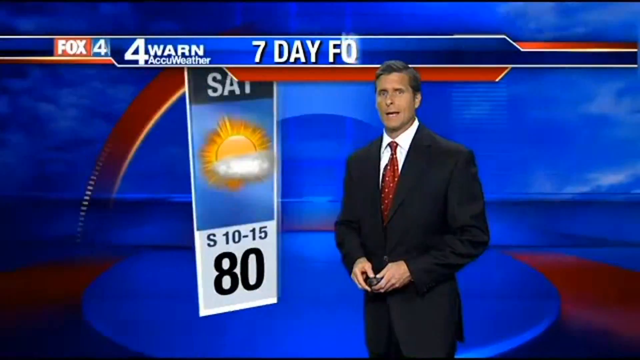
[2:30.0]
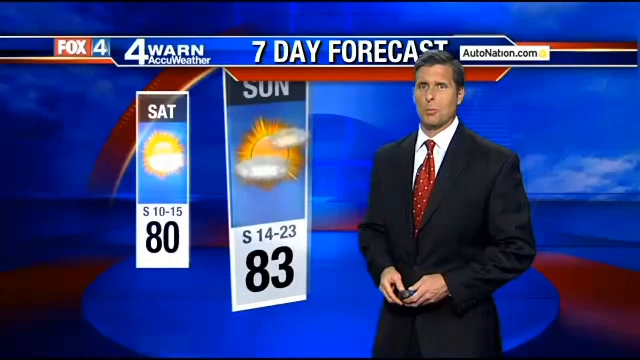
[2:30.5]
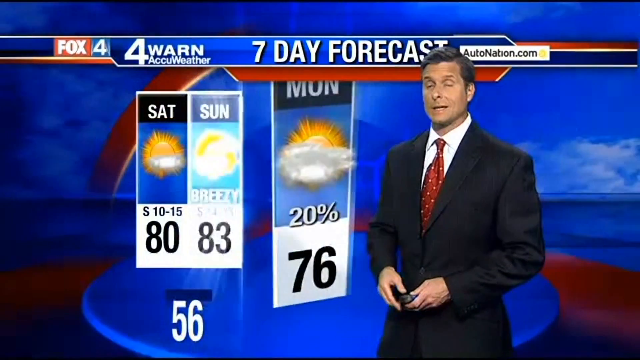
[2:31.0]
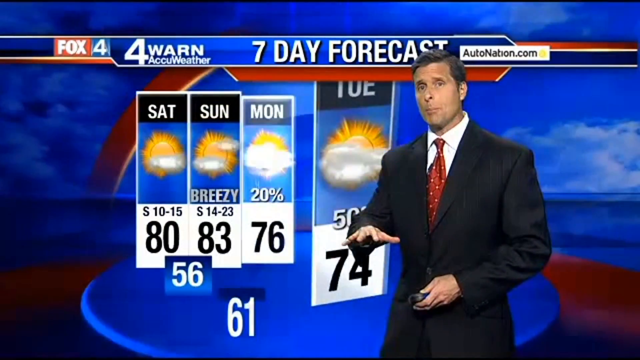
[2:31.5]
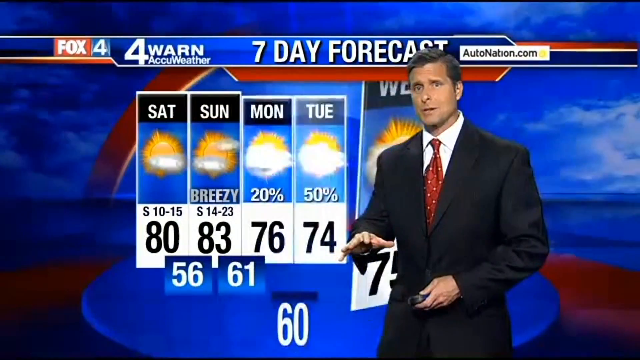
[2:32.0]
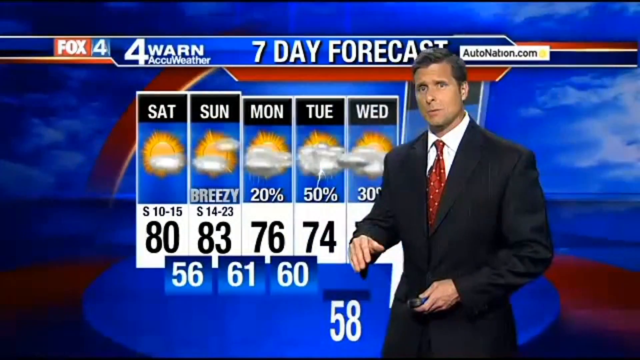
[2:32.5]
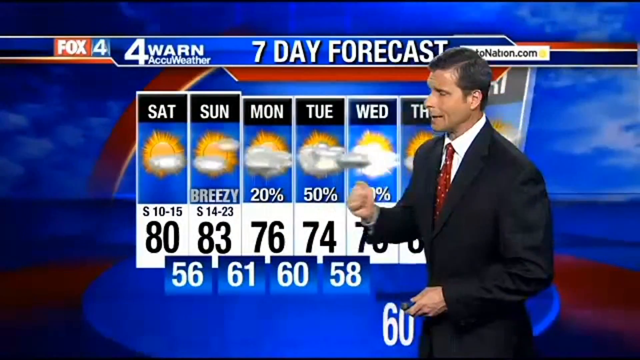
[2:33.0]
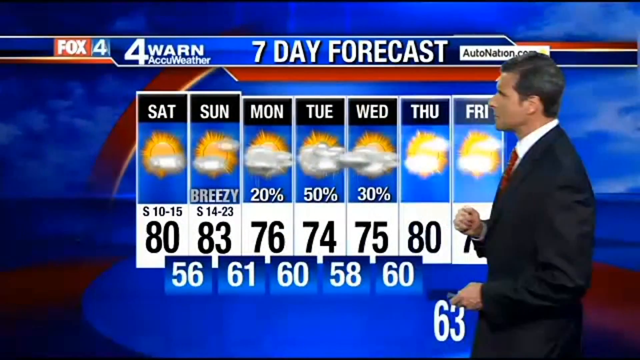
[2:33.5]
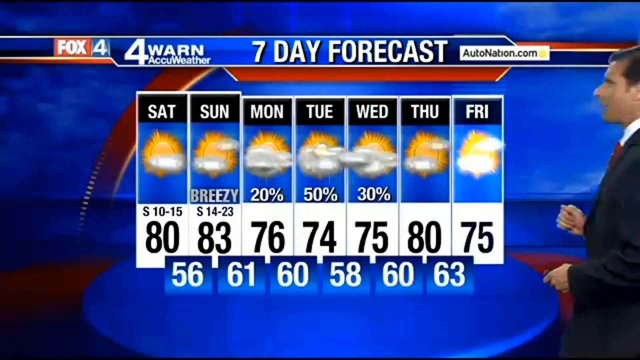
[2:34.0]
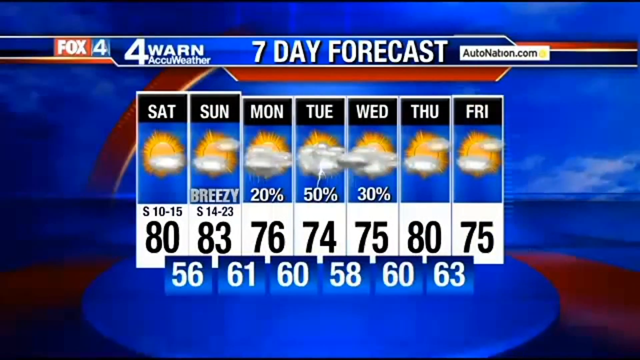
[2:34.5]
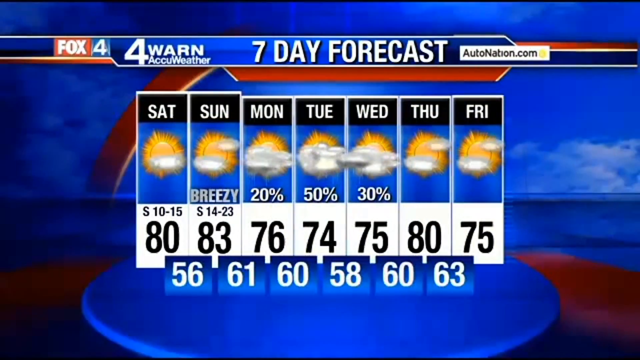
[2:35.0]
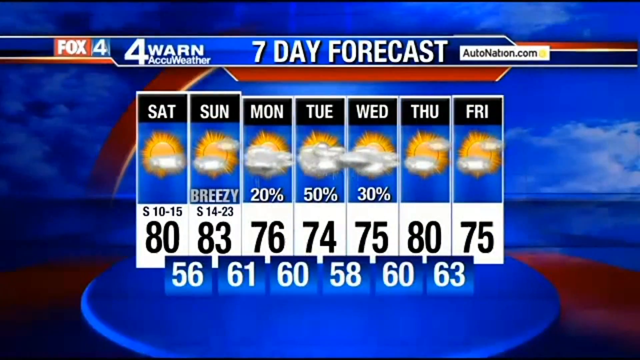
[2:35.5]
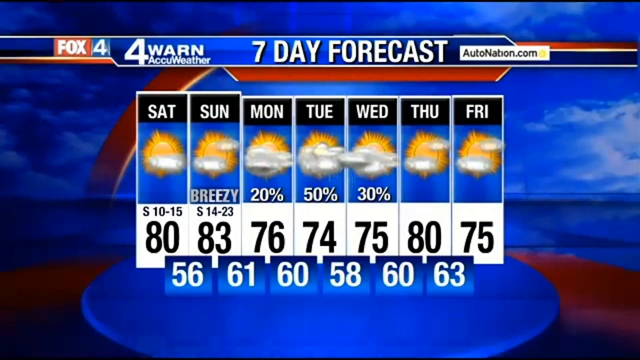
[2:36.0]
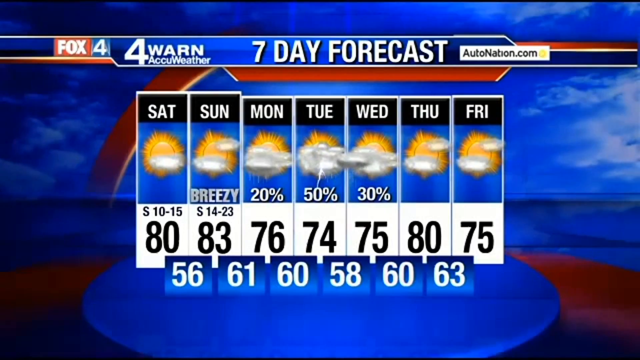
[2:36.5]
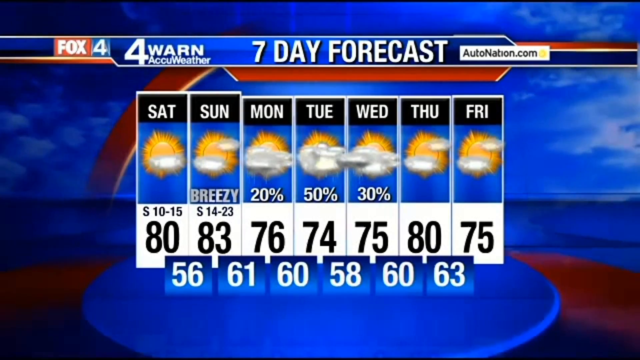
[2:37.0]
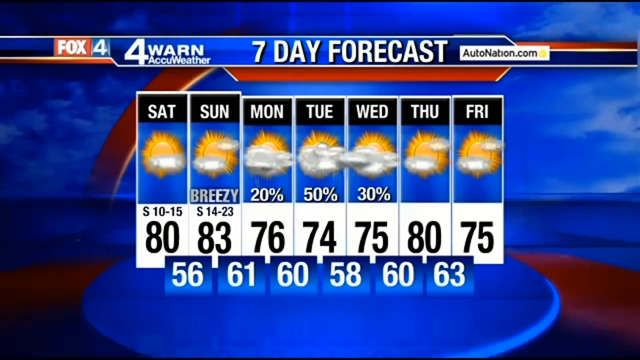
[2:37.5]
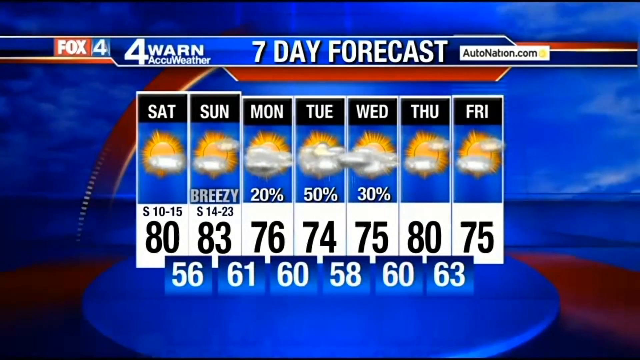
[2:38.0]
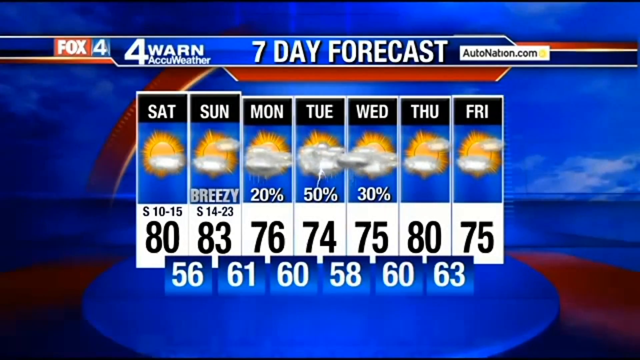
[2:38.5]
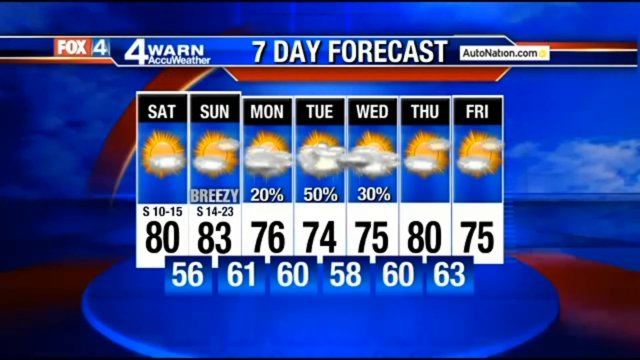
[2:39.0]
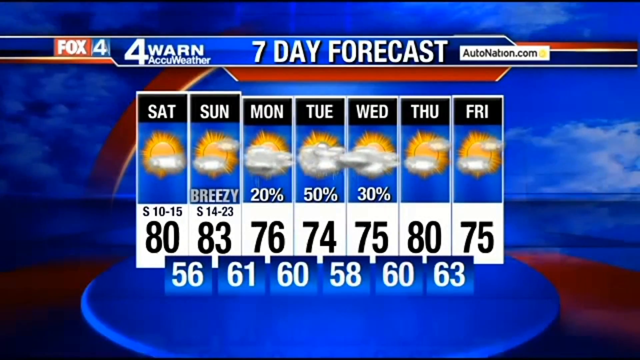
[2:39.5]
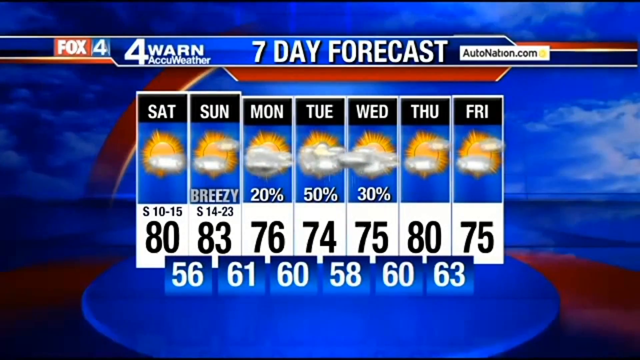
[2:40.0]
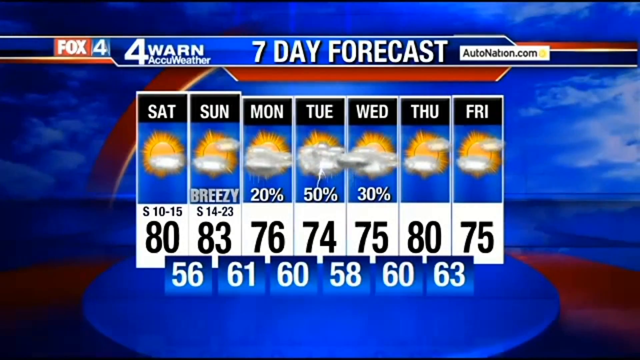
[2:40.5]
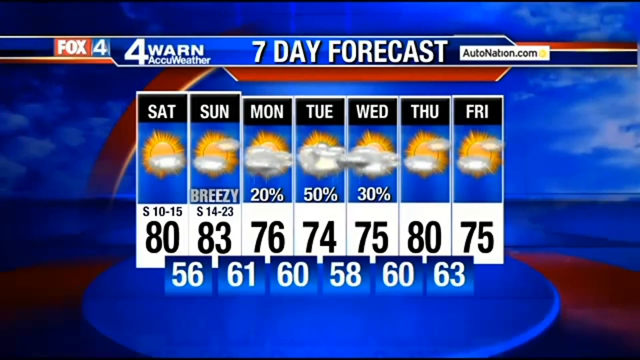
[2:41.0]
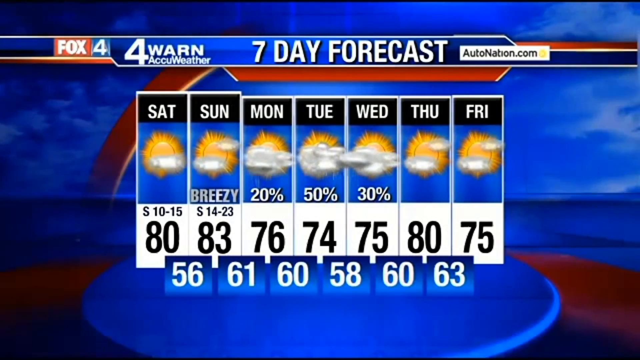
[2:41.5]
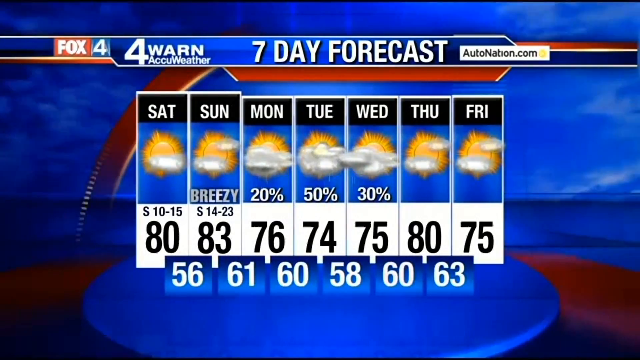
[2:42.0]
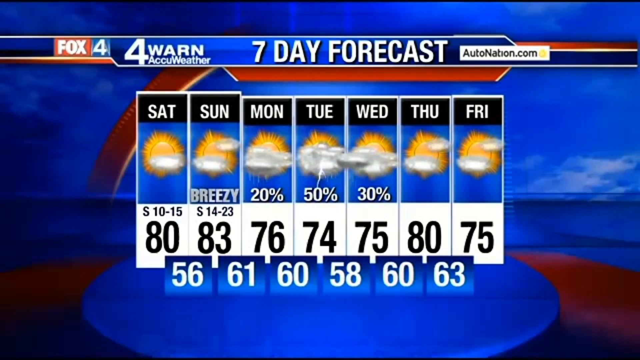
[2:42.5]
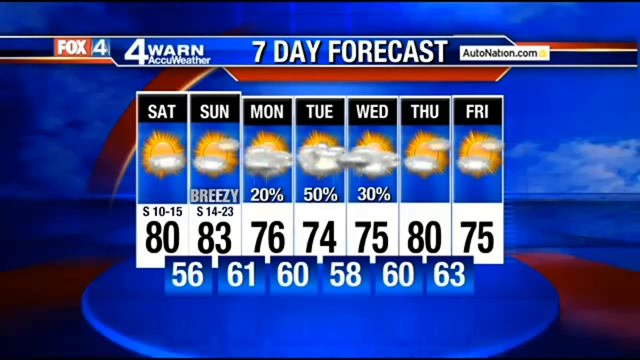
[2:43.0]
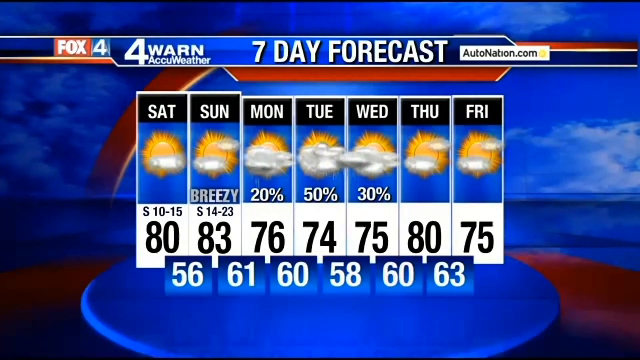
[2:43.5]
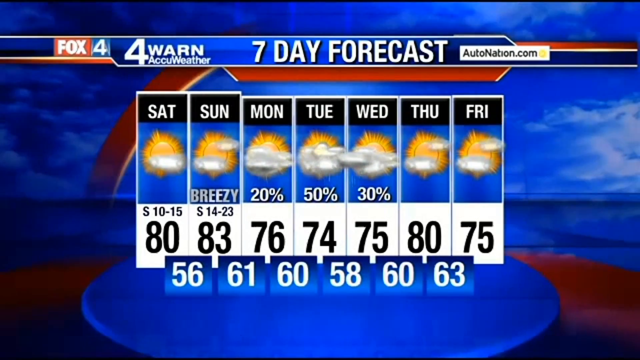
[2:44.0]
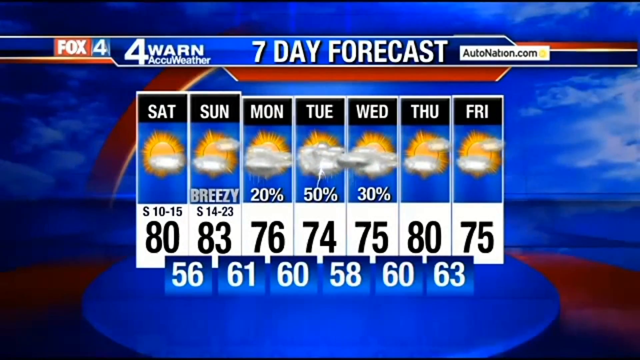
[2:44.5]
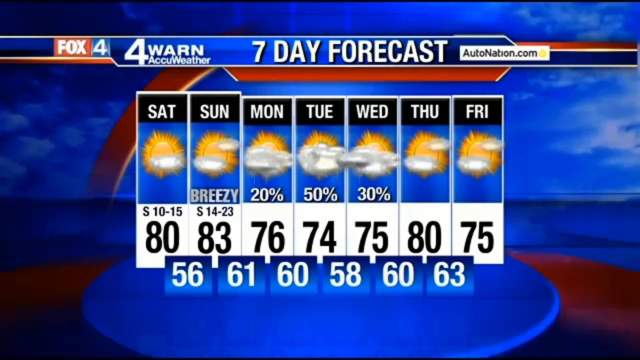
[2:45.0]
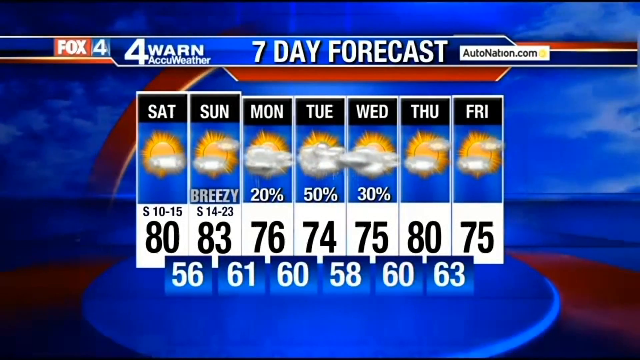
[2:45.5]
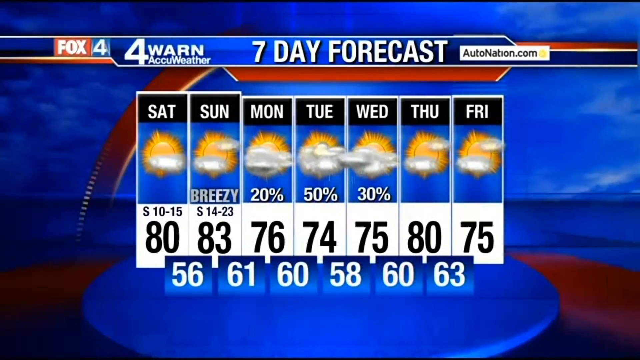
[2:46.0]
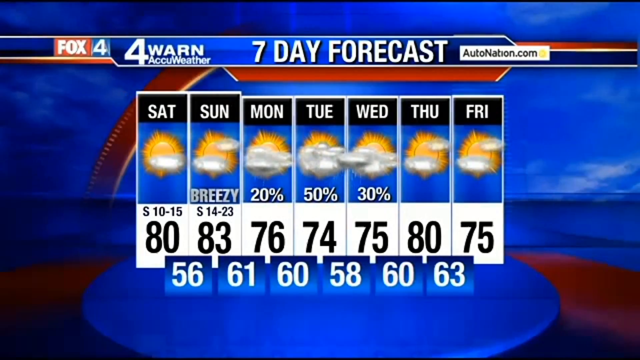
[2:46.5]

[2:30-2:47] A weatherman stands in the center of the screen, a little toward the right. Behind him is a graphic reading "seven day forecast" at the top, showing the forecast from Saturday to Friday. Underneath are images of the sun with white clouds in front of it, and below them temperatures in black text going from 80 to 75 from left to right. Behind that is a background that kind of has a blue sky with some clouds and some red streaks. The weatherman wears a black coat, a white dress shirt and a red tie, and has short black hair combed to his right. He holds what looks like a remote control in both hands in front of his waist.